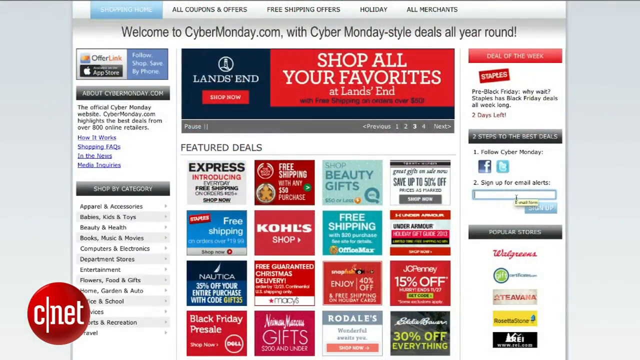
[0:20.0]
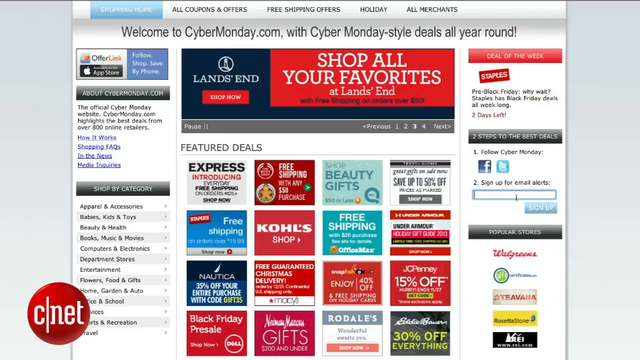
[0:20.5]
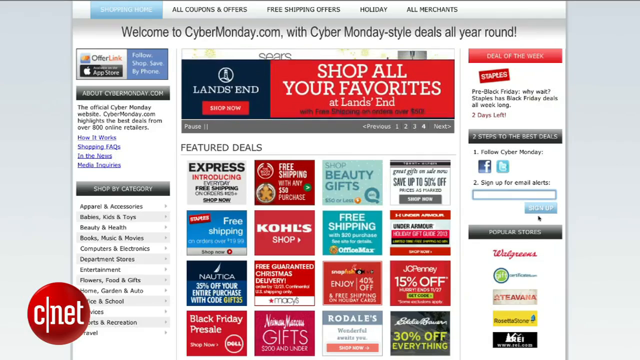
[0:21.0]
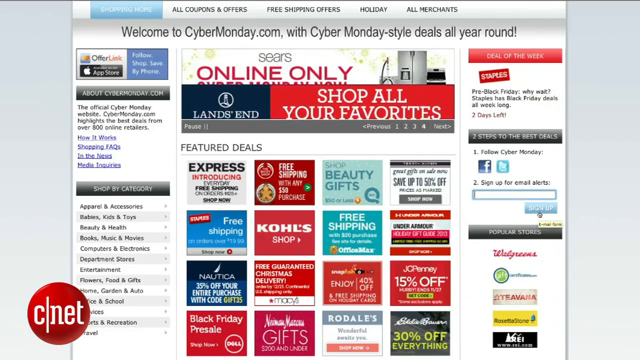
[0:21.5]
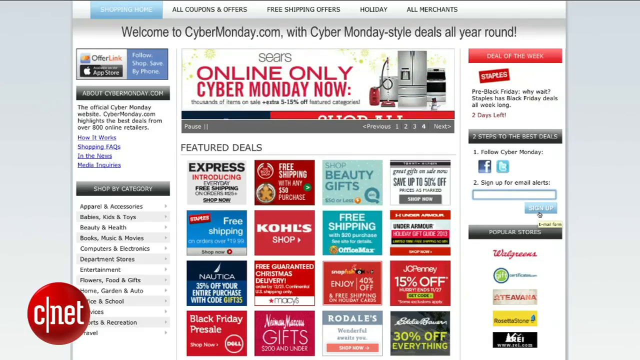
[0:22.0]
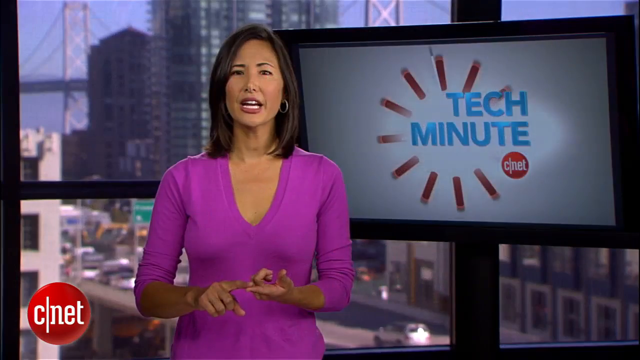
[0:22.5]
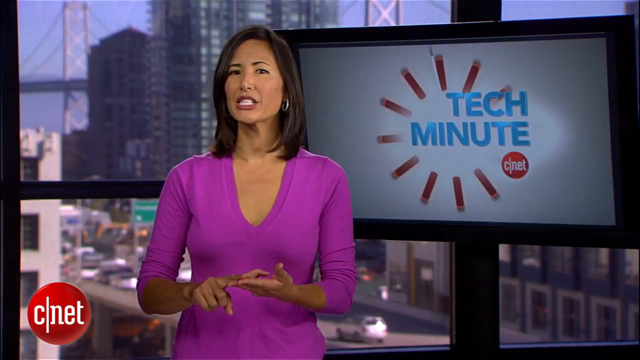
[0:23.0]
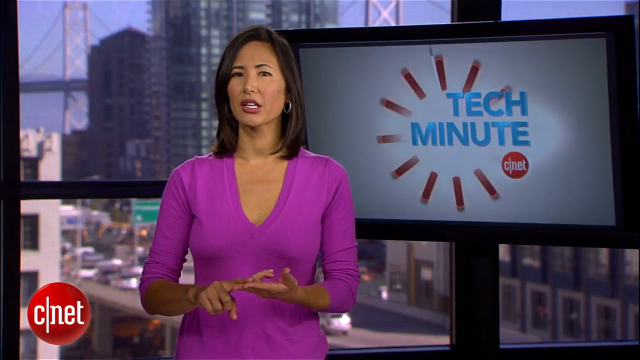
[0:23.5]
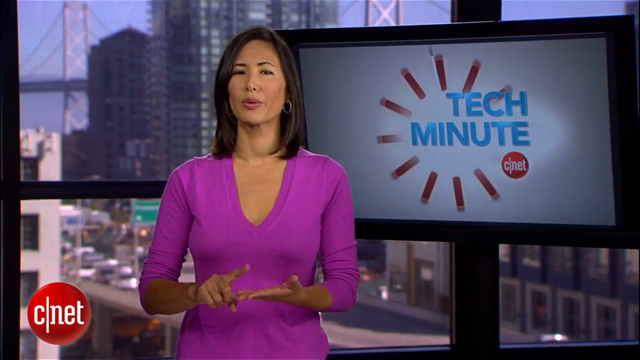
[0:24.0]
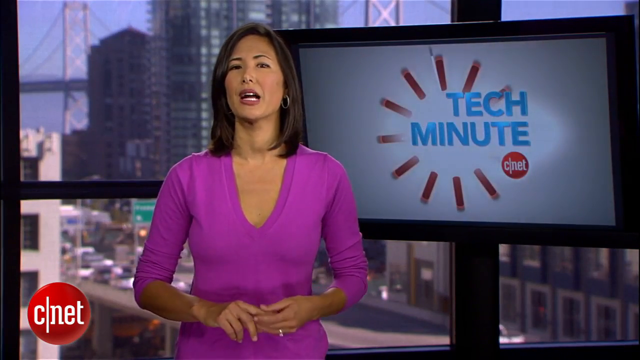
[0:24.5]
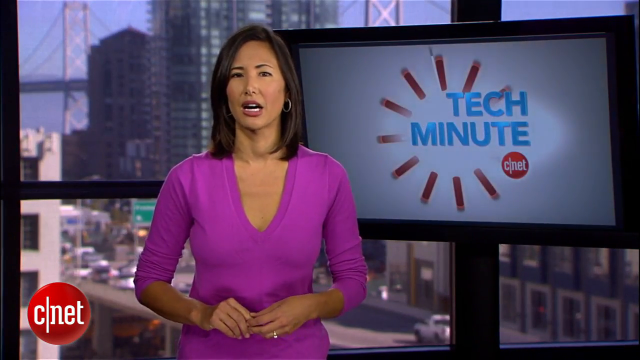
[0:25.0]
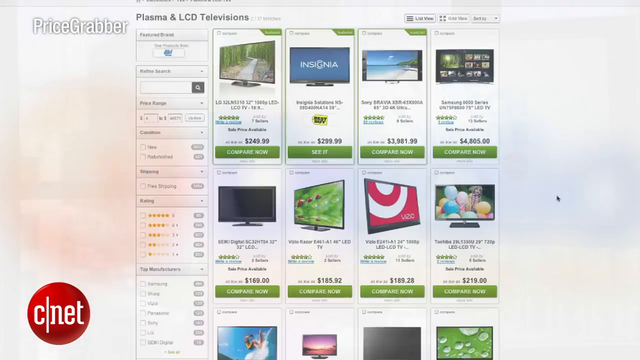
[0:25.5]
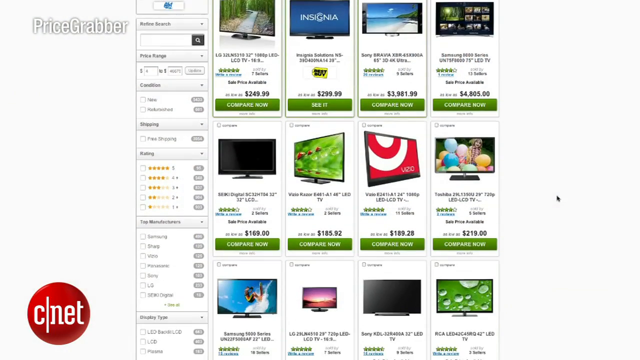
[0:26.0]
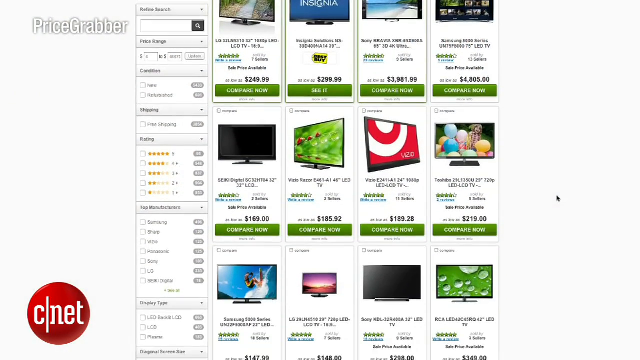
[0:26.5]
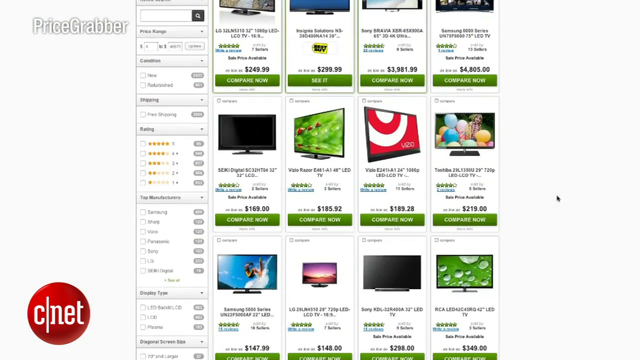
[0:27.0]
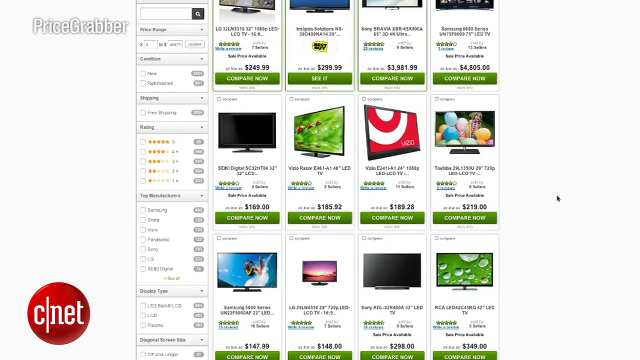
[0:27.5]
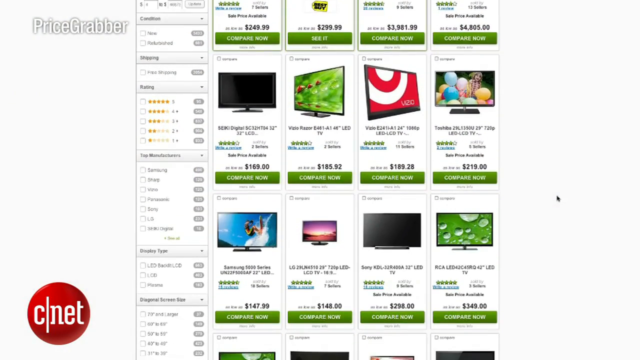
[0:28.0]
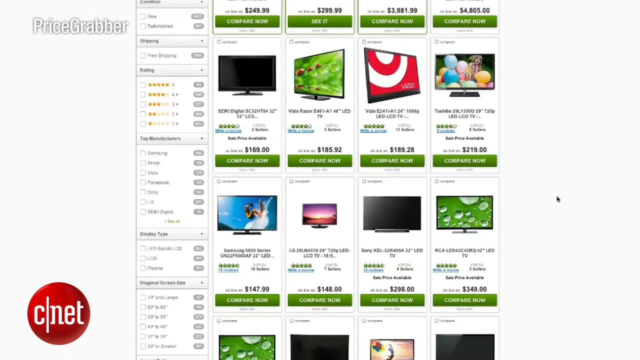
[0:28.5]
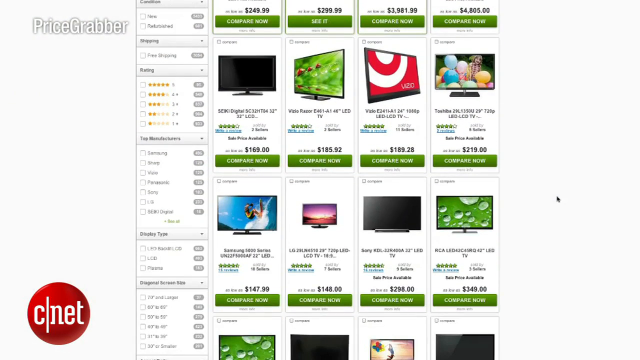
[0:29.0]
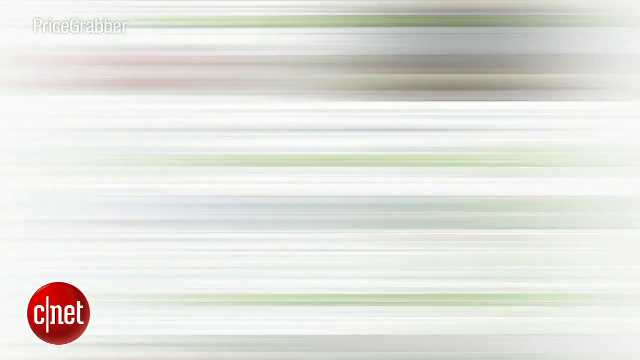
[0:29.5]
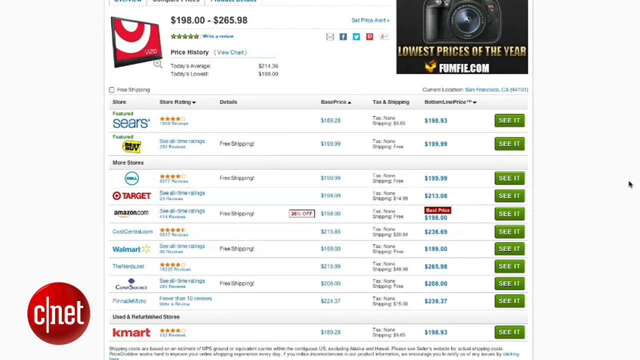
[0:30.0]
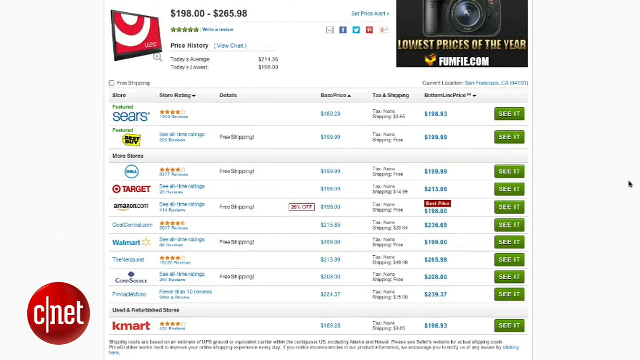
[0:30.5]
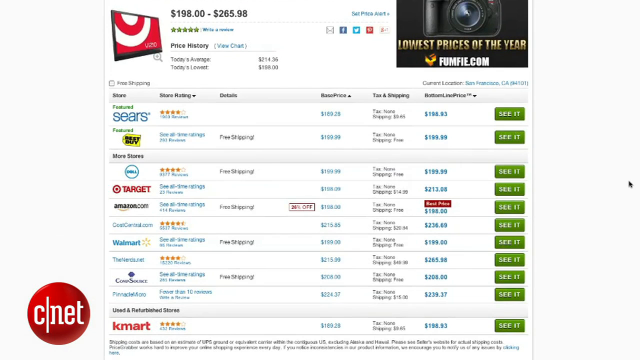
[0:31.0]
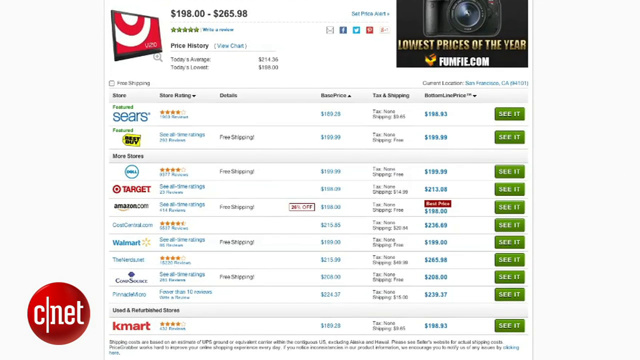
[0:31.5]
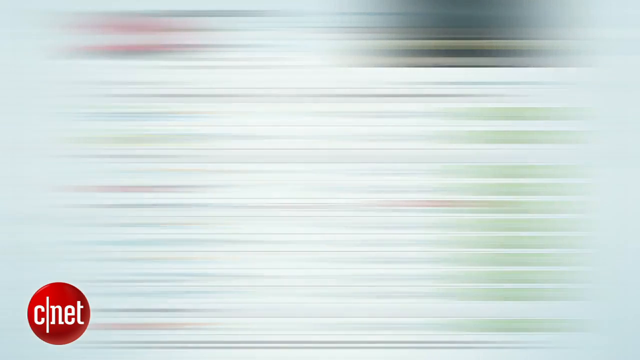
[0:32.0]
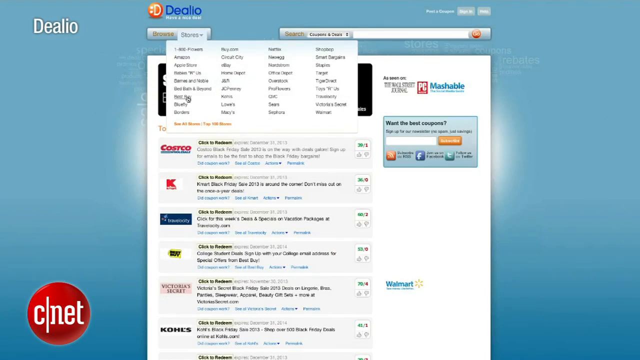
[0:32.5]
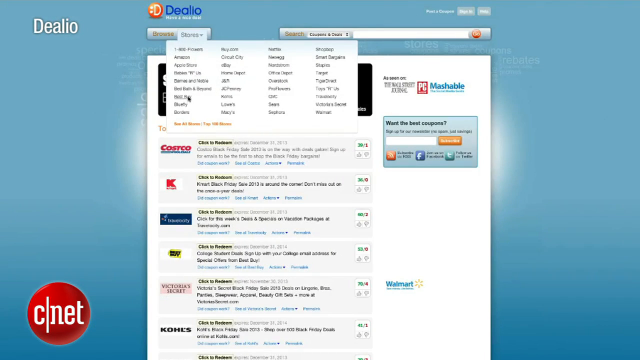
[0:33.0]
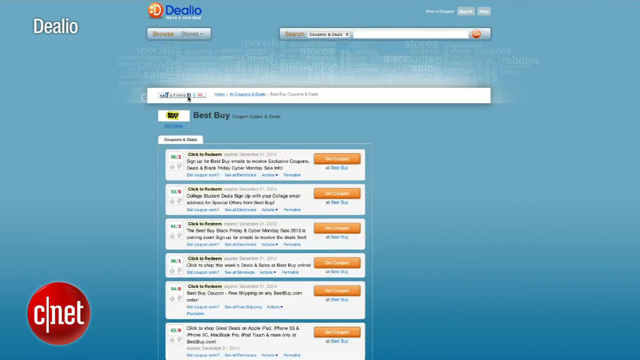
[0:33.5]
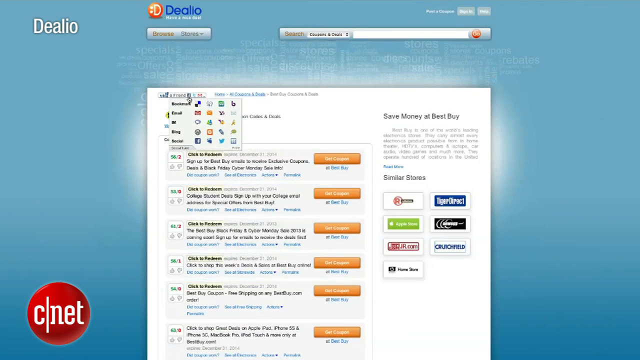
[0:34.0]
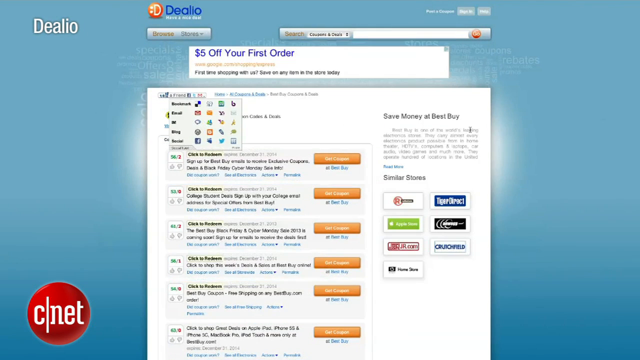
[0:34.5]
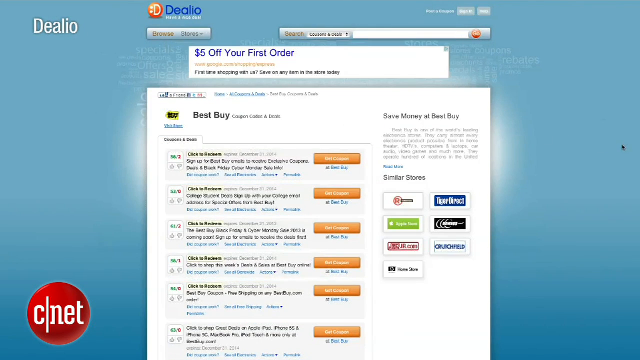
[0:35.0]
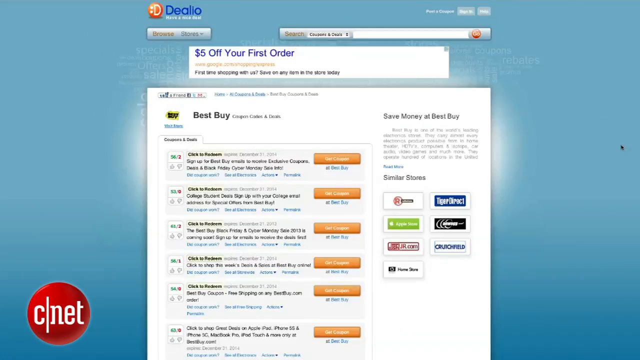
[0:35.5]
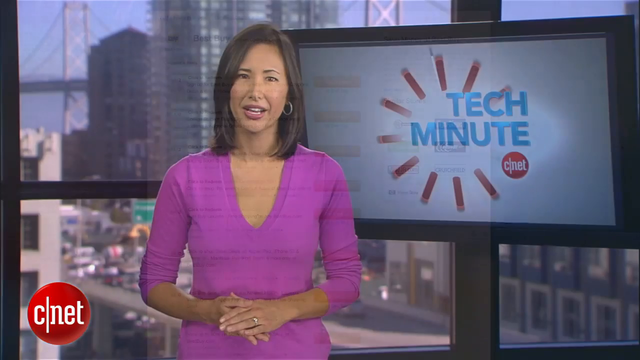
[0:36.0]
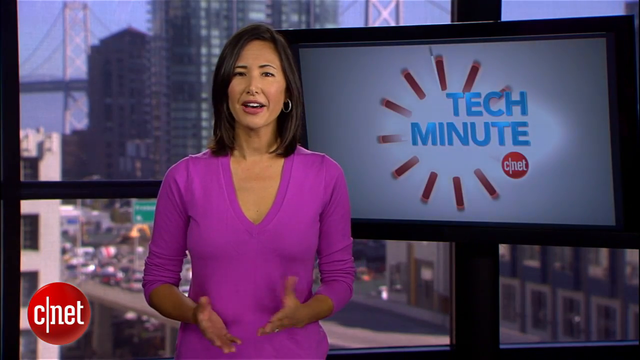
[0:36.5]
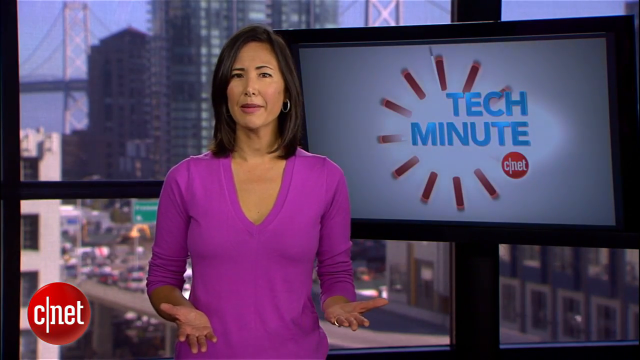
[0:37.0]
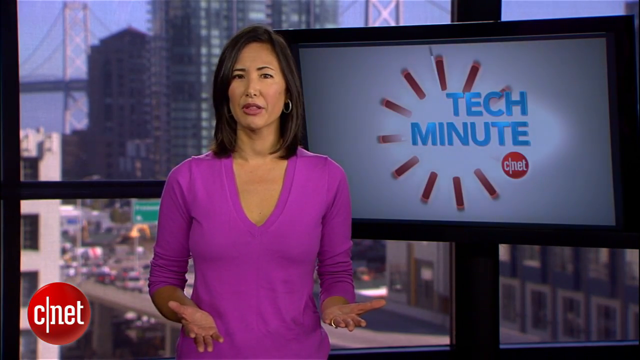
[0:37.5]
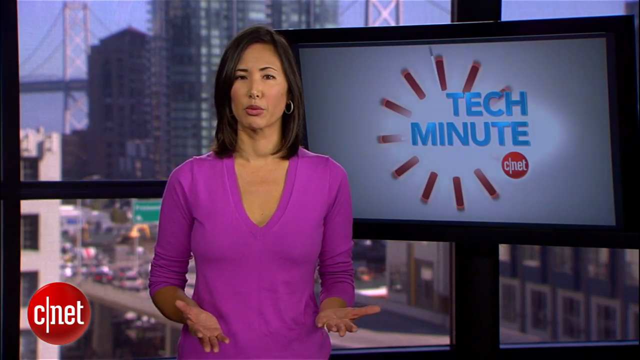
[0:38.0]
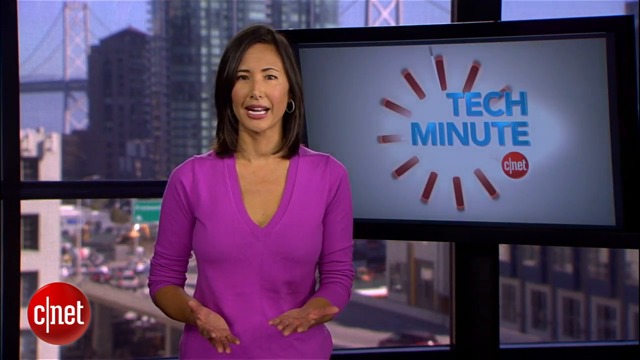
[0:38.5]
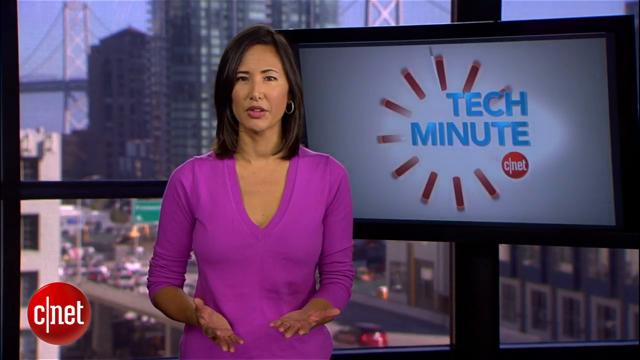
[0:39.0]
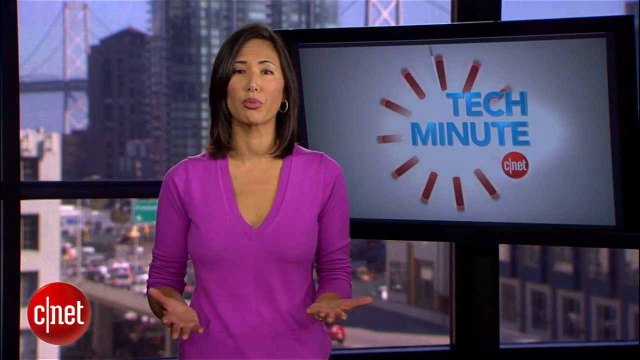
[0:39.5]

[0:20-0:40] Listings of Cyber Monday deals are shown, and then apparently a new page showing Target stores with their deals. The reporter also shows another site called dealio with examples of Cyber Monday sales. She wears a pink shirt and has ruddy skin and long black hair. Behind her is the San Francisco skyline, with the Golden Gate Bridge in the background and many cars passing by on the street. The report moves from web page to web page, showing various deals across the internet.